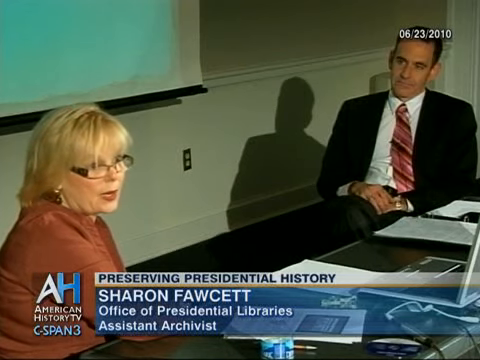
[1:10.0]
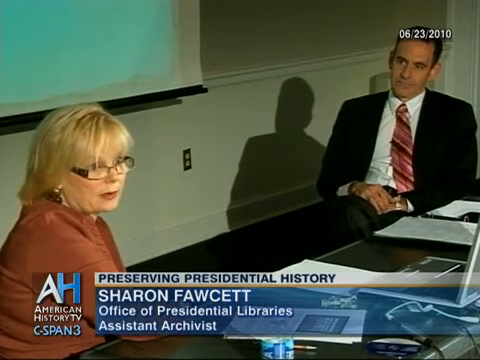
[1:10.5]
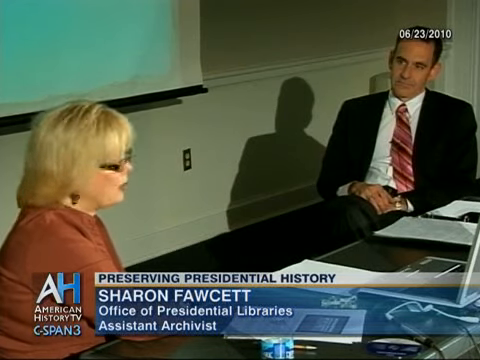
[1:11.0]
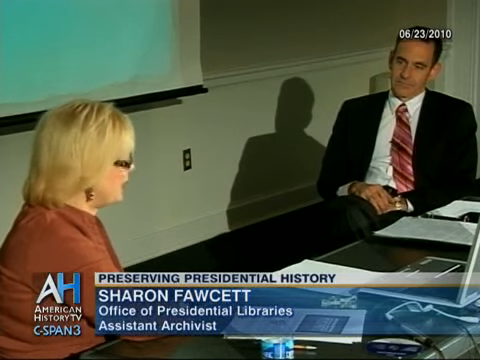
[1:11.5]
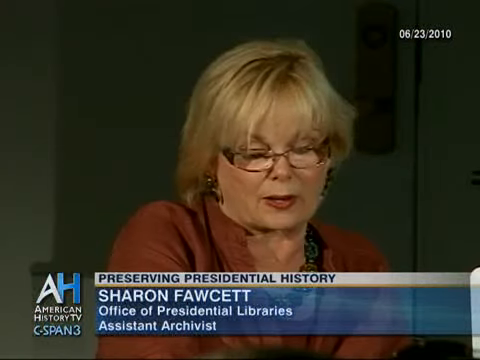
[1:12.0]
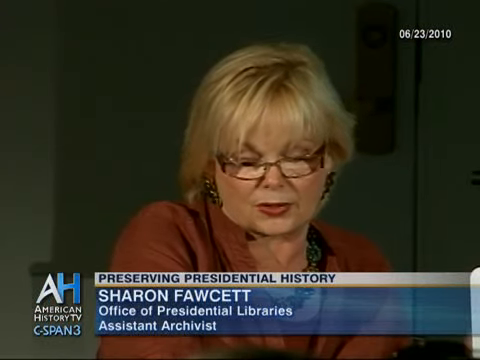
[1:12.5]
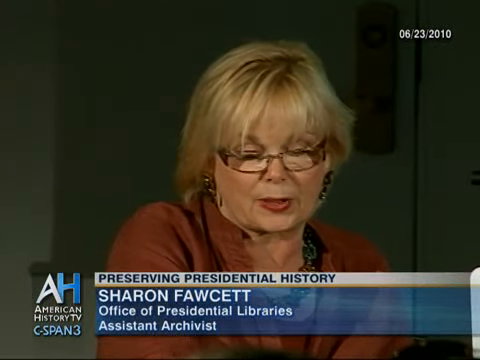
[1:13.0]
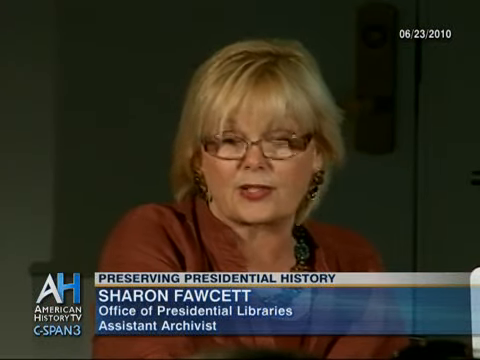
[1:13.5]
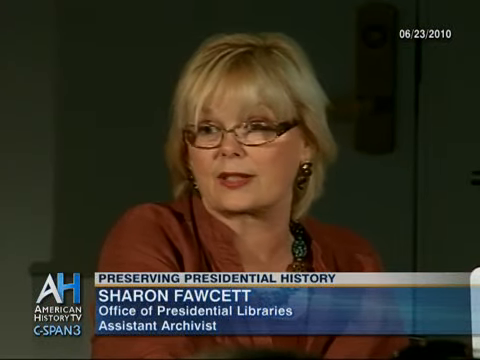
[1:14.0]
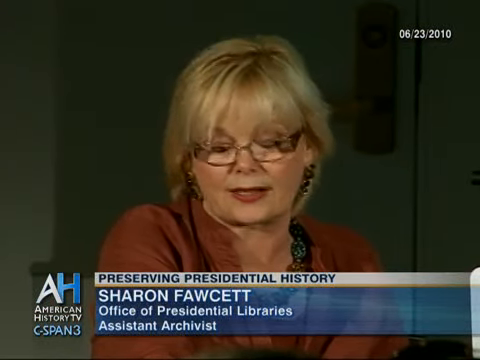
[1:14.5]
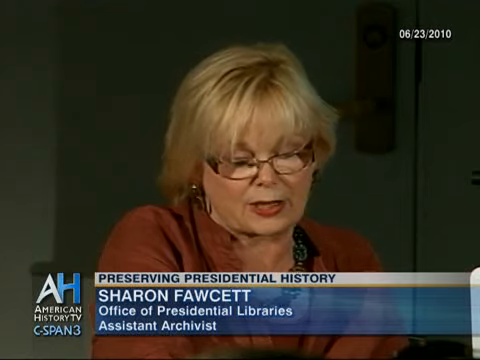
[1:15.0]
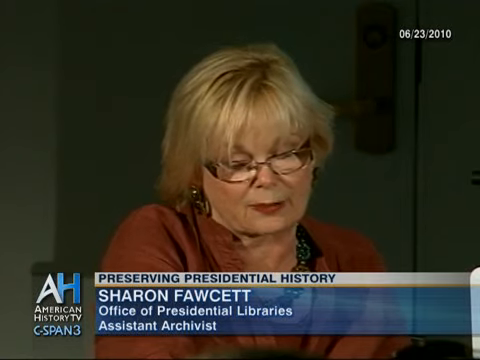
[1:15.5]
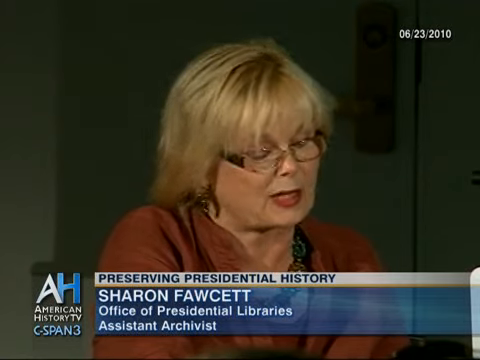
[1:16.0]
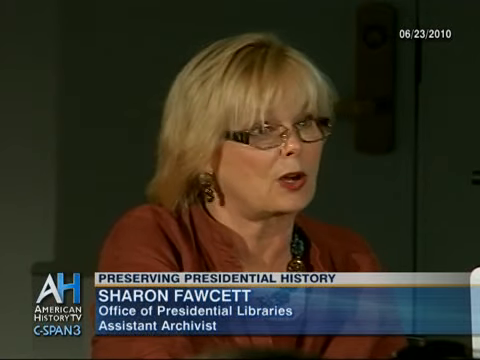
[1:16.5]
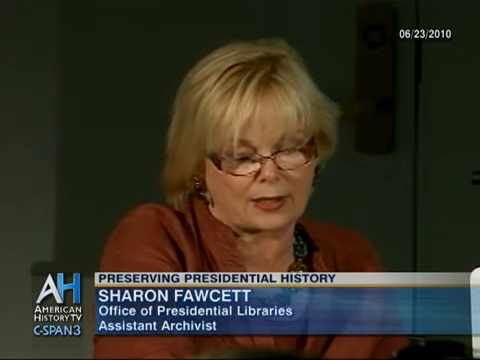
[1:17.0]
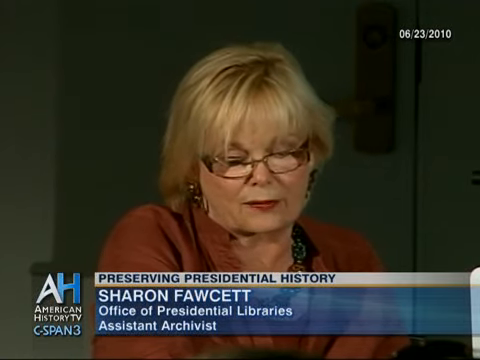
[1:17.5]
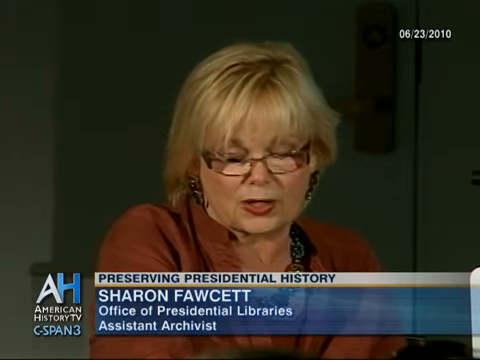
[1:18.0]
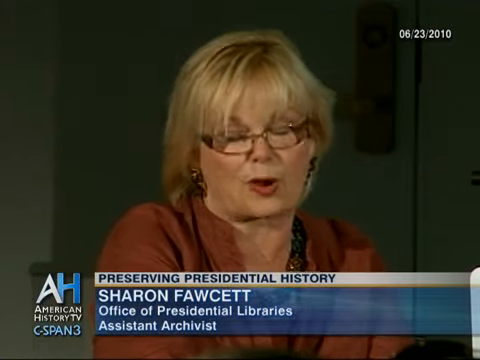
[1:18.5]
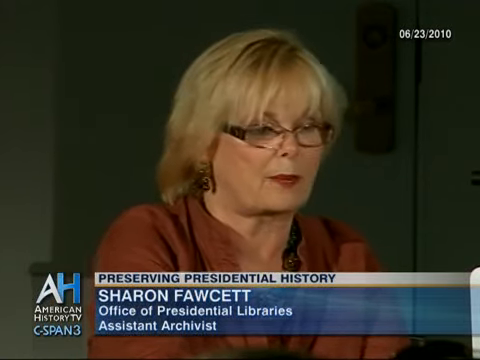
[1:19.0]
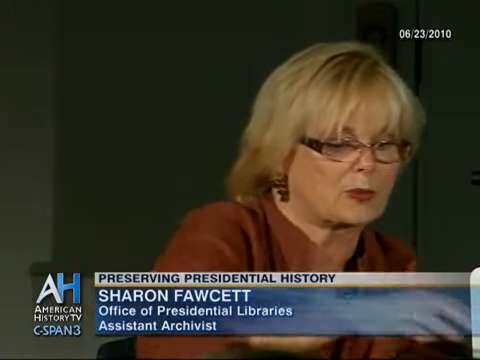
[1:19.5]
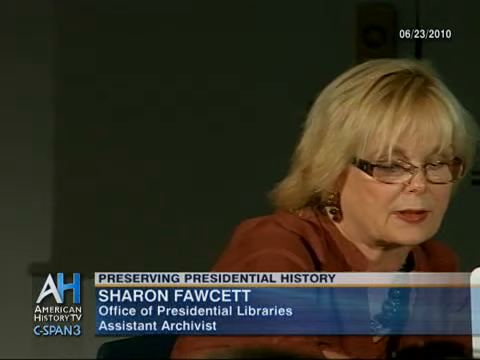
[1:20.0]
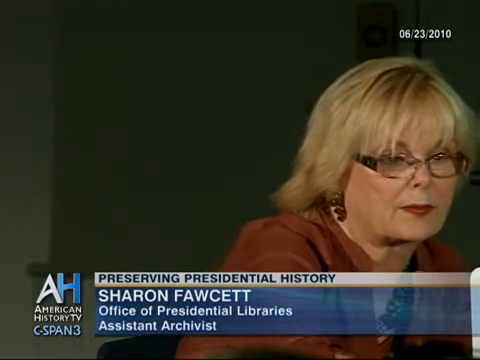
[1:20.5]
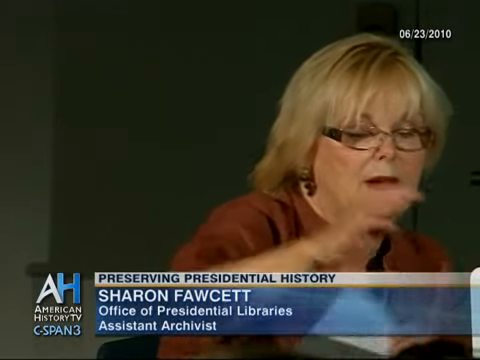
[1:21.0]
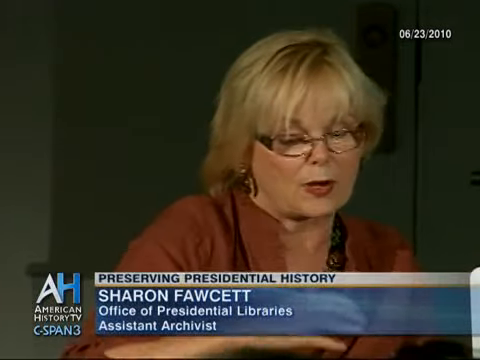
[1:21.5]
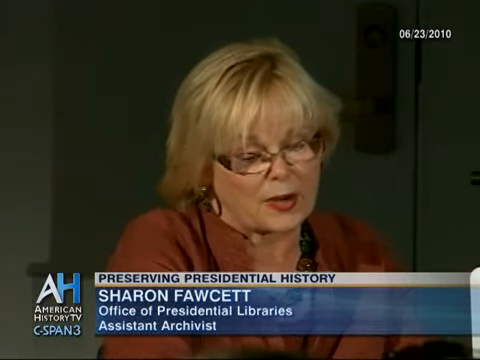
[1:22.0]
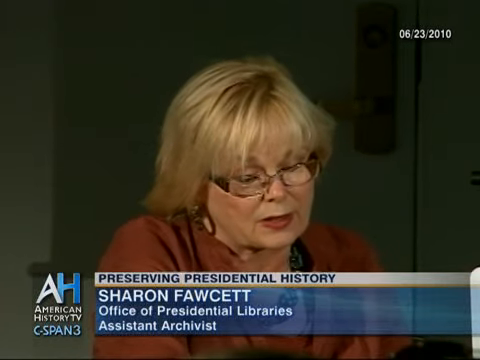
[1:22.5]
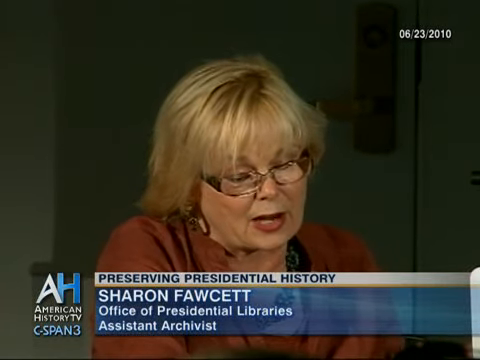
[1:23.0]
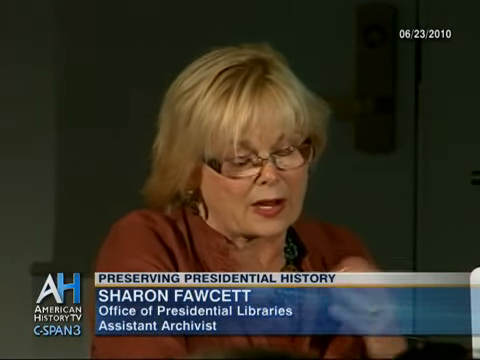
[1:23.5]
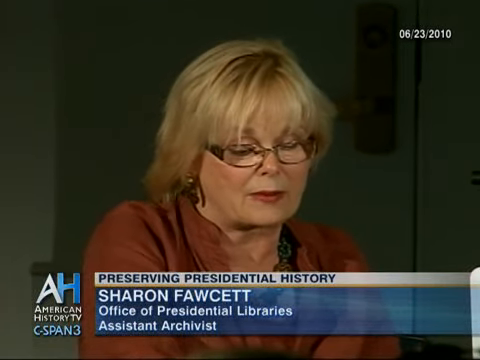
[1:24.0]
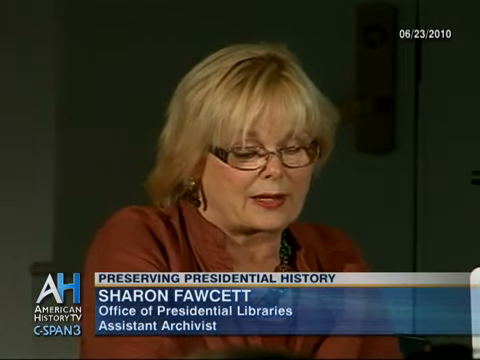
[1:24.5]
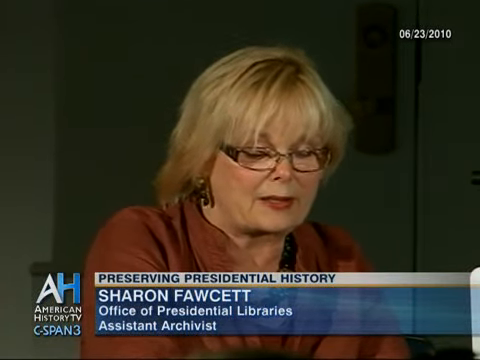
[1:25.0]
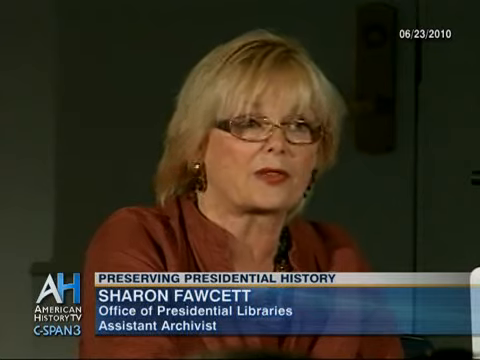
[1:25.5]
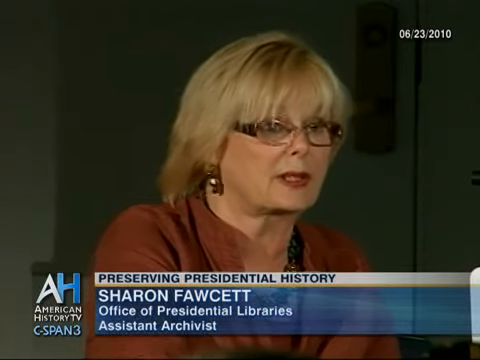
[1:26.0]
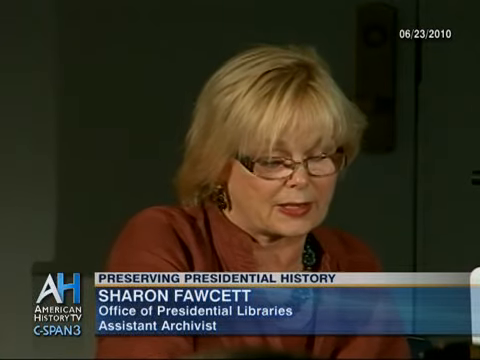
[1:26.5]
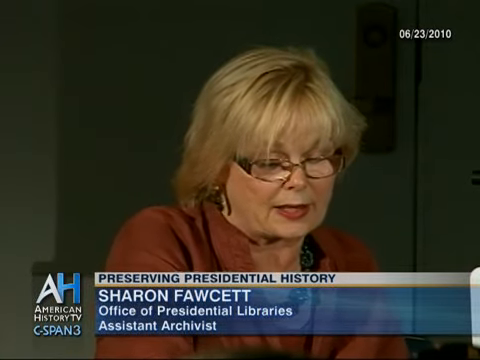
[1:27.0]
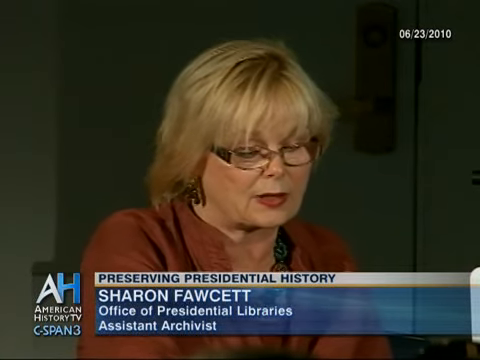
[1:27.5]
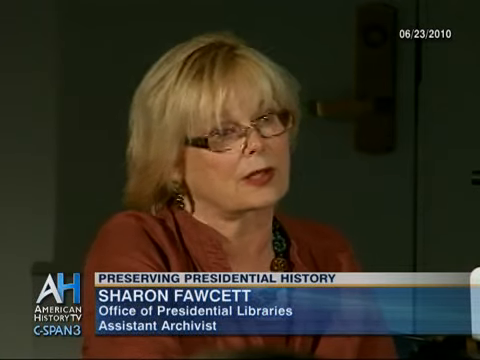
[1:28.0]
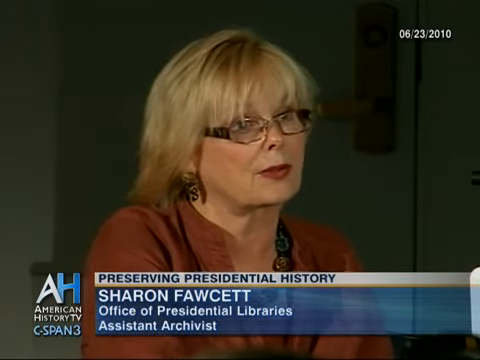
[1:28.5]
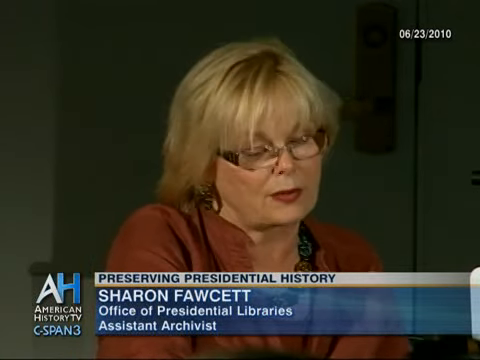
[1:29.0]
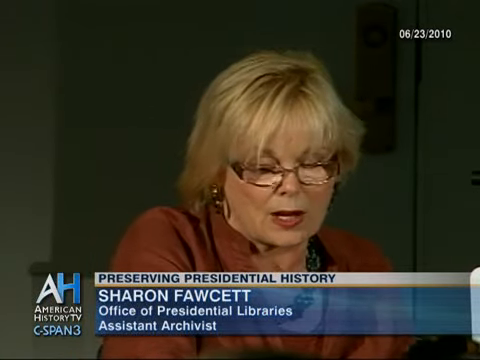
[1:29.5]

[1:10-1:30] After more footage of the two debating, the video cuts to a new angle, with a camera facing Ms. Fawcett more straight on. She has white hair that comes down not quite to her shoulders, and she wears glasses and earrings. She is talking and, because of the different camera angle, looks a little more toward the camera. Sometimes she nods her head down to look at her notes, then lifts it and looks in different directions; her lips are moving almost constantly. At one point she reaches to her right, which is also the viewer's right, as if to pick something up from the table in front of her, though the table cannot really be seen because the shot is too close on her. A caption below identifies her by name, and a header at the top says "PRESERVING PRESIDENTIAL HISTORY" in all caps, blue against a white background. She continues to talk, nodding her head and occasionally looking down and up.